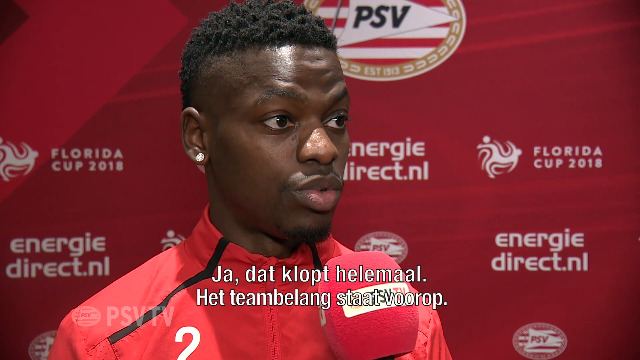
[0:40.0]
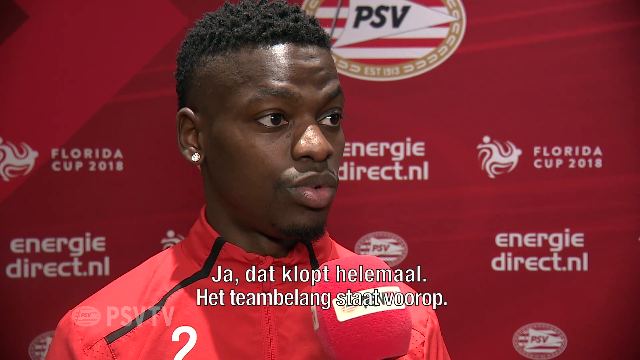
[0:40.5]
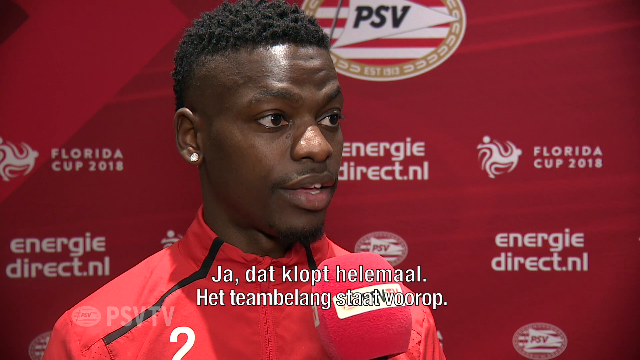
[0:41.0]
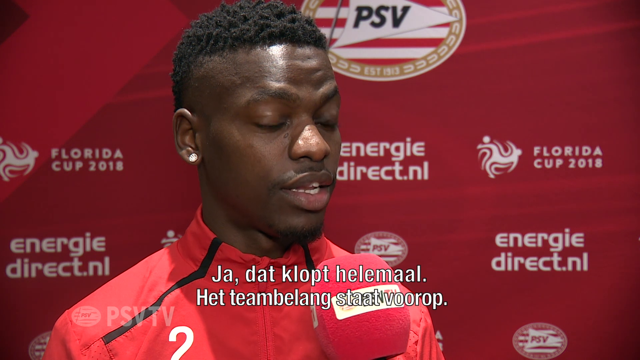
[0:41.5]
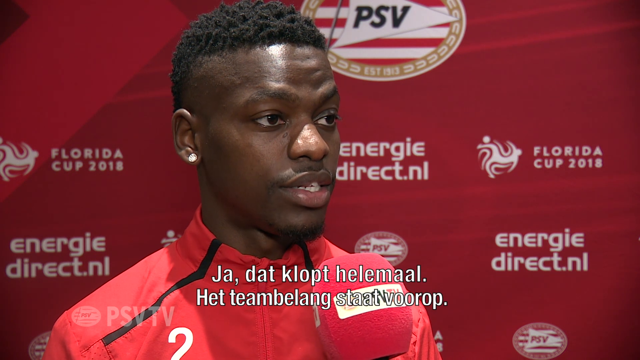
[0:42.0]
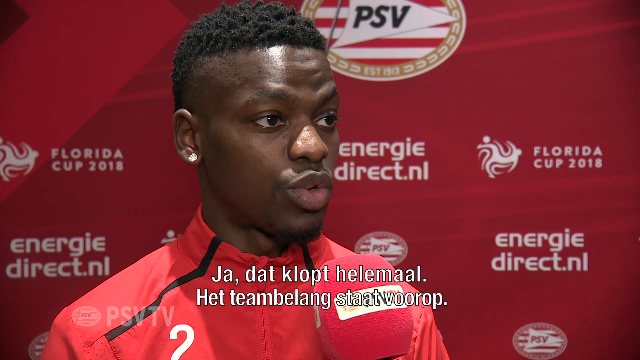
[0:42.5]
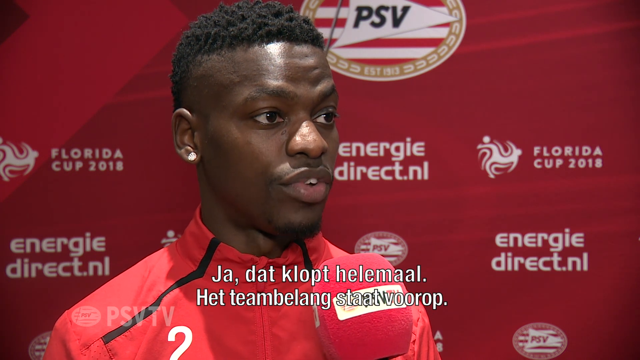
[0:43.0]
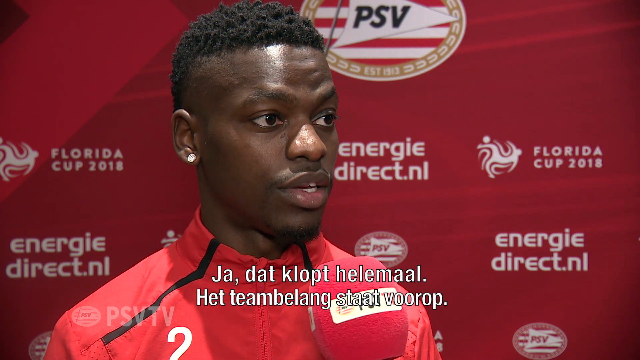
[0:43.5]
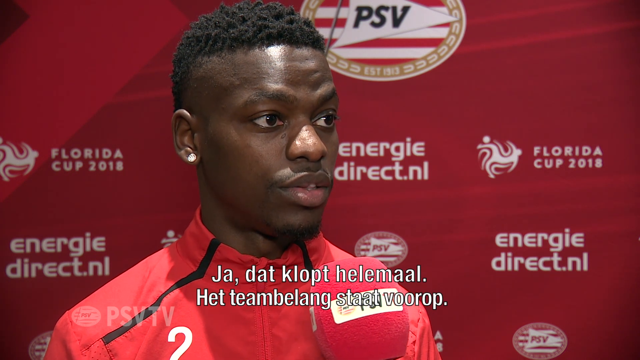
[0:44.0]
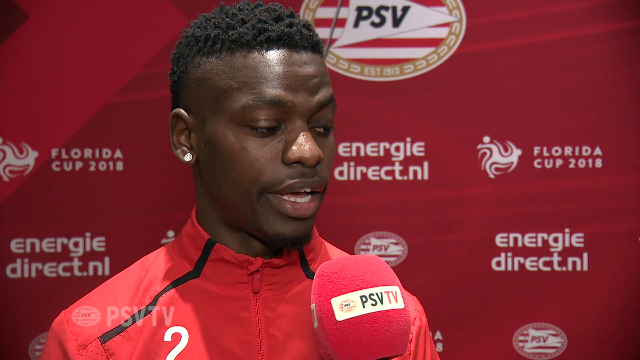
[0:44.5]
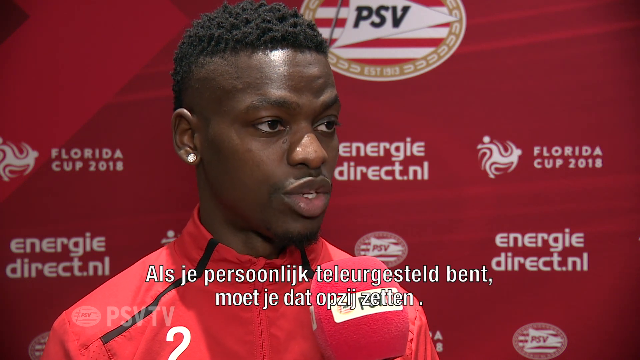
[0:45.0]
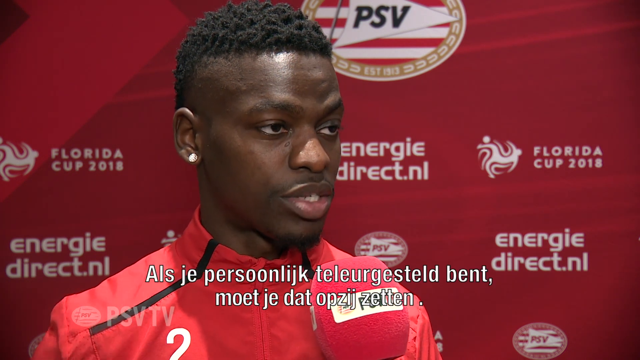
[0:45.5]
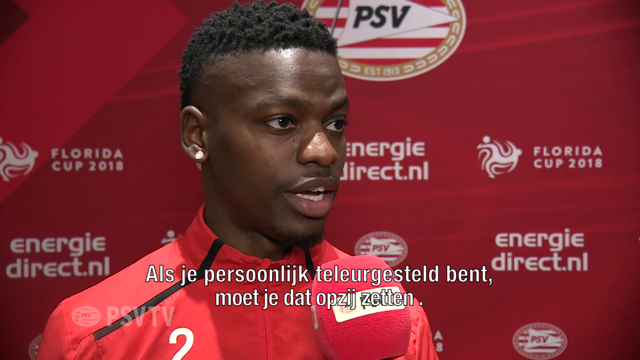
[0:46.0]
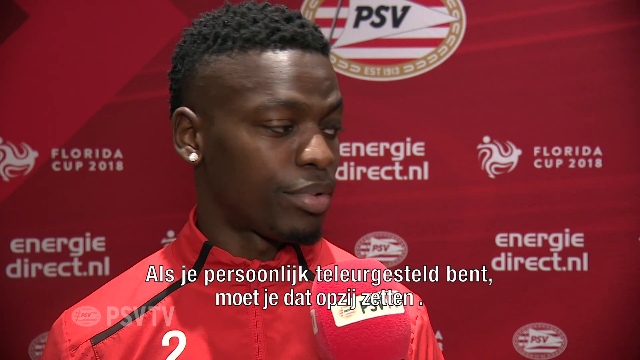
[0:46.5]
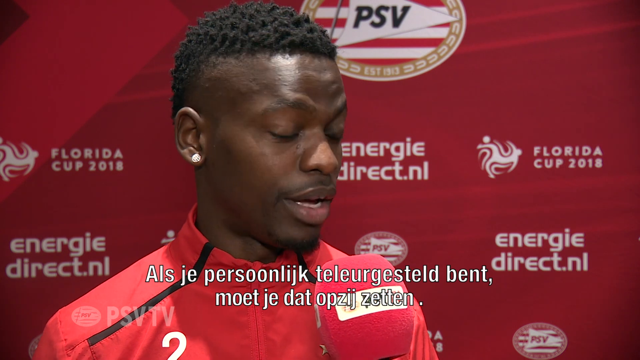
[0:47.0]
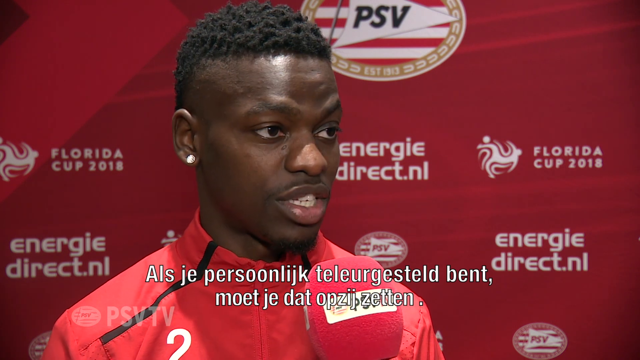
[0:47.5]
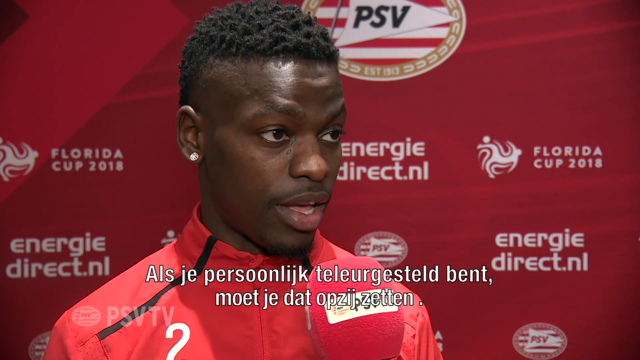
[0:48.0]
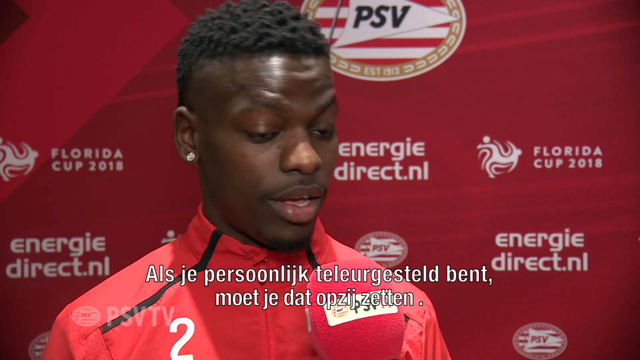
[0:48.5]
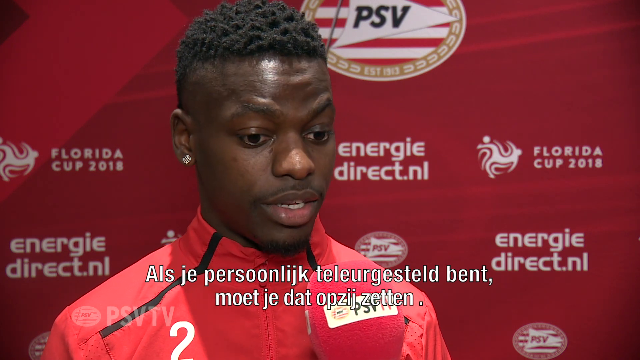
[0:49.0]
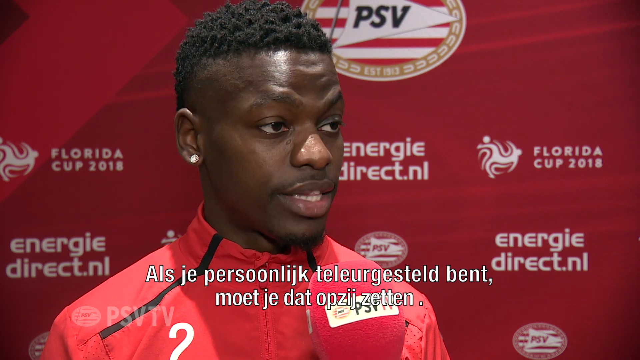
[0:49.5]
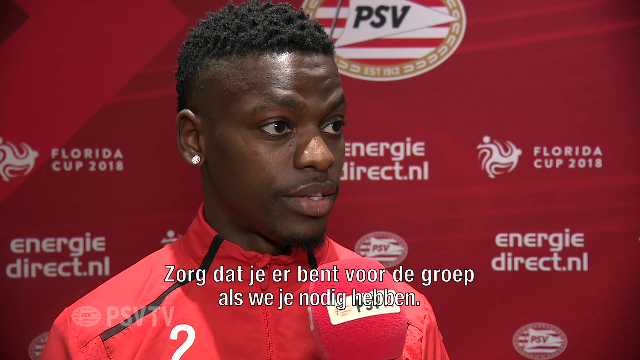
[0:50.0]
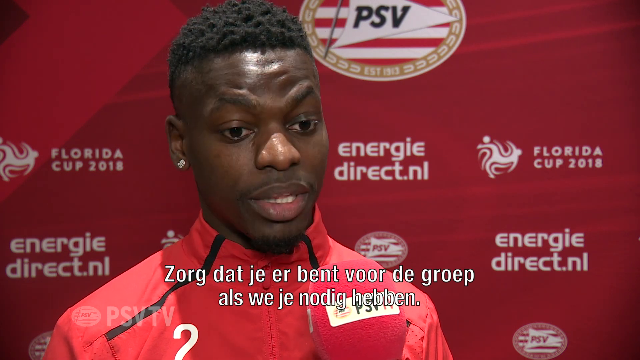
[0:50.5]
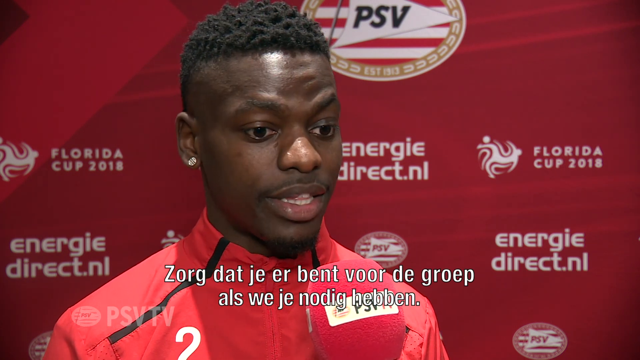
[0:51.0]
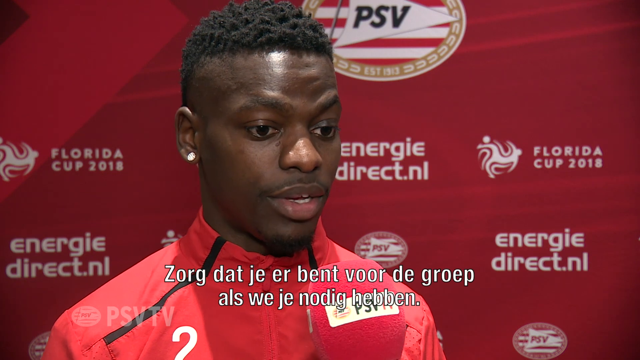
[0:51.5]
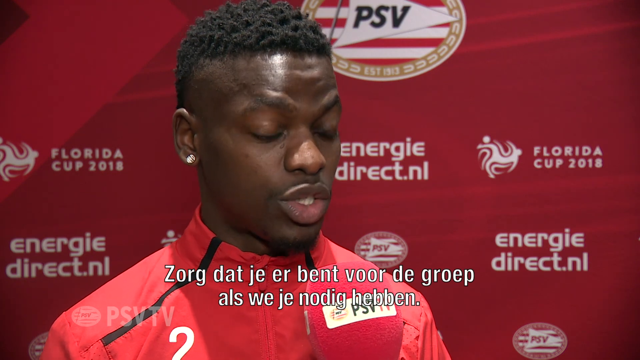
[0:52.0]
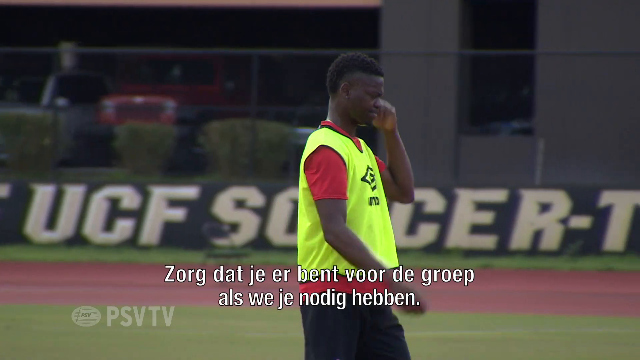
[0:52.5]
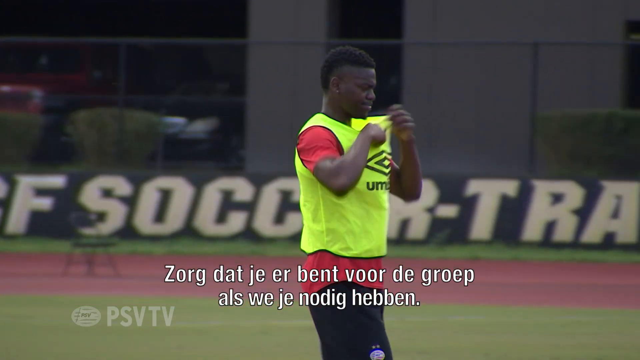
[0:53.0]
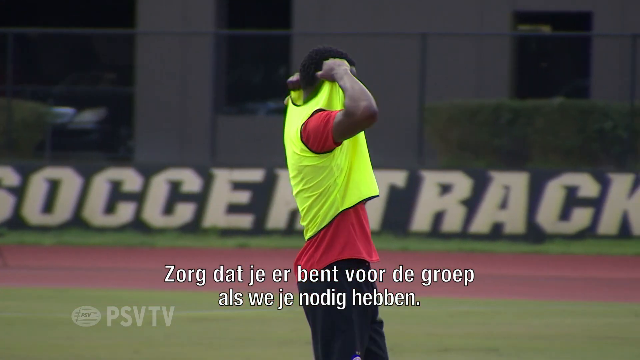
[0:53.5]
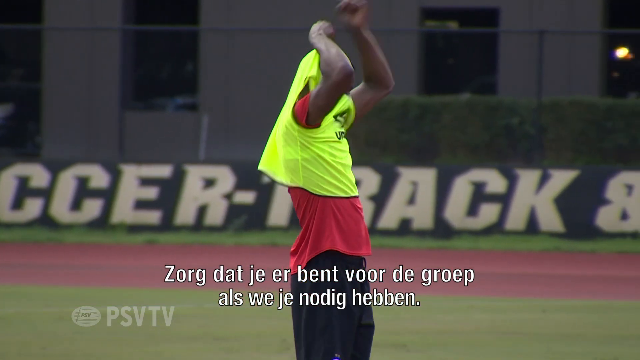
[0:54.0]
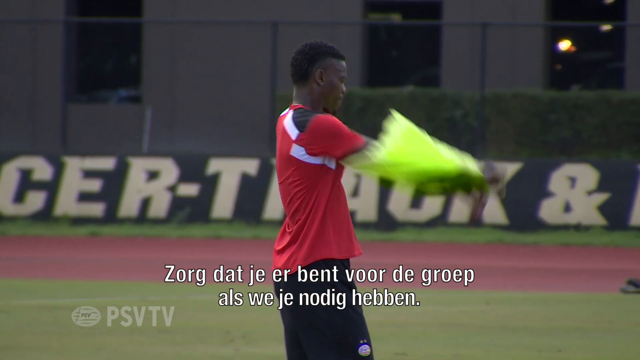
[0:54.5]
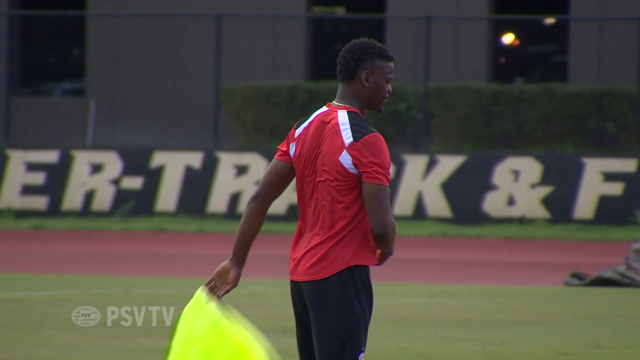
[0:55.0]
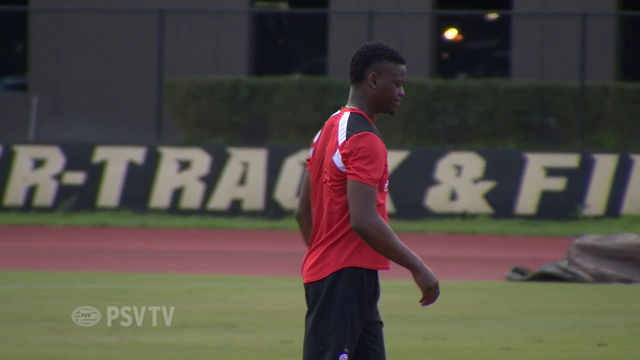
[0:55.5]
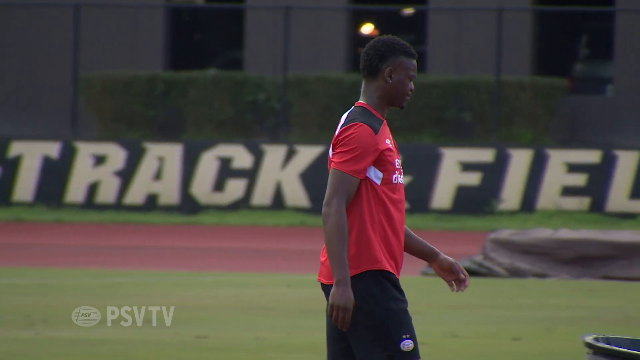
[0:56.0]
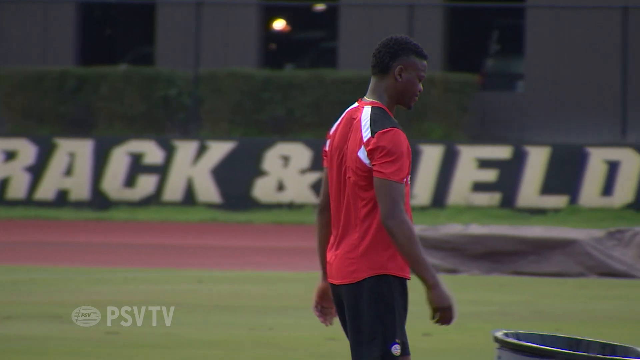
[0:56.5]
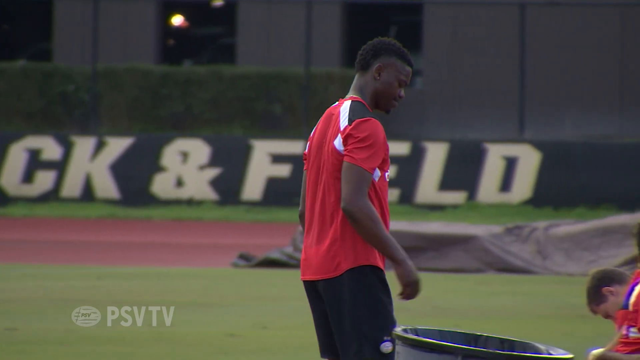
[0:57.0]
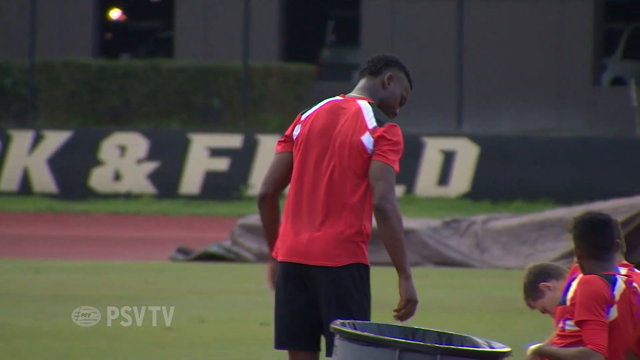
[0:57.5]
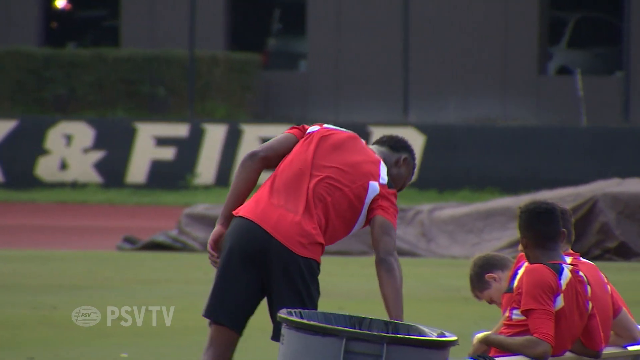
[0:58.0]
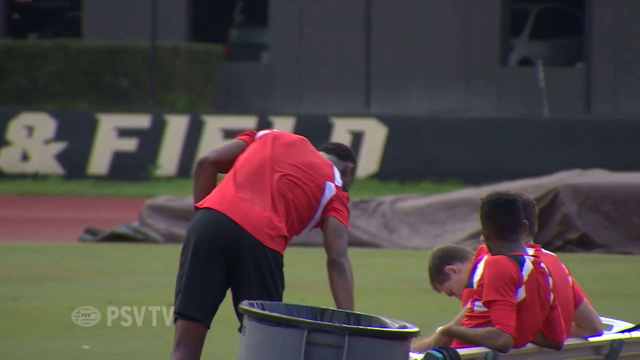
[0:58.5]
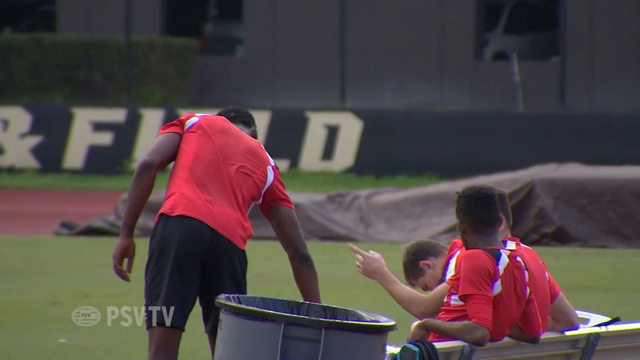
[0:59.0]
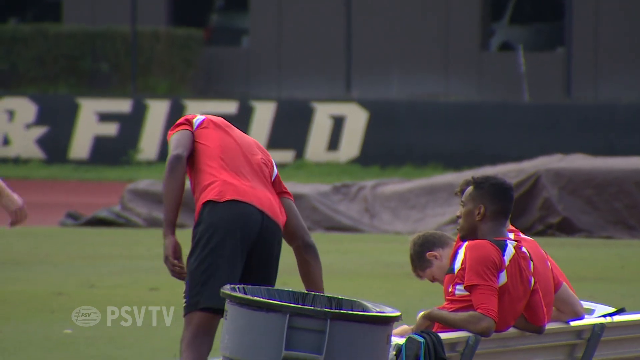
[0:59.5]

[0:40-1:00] A man is interviewed in front of a red sign showing various sponsors' names, including "Florida Cup 2018" and "EnergyDirect.nl". The man is on a field and stops to take off a yellow jersey as he goes to sit down for a break; underneath he wears a red jersey that resembles a soccer jersey. Behind his head is an emblem with a capital black P, a capital black S and a capital black V. As he walks, a sign that says "field" is visible in the background, along with one that says "track and field".